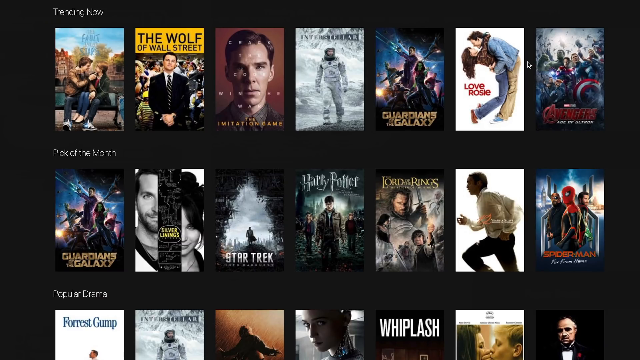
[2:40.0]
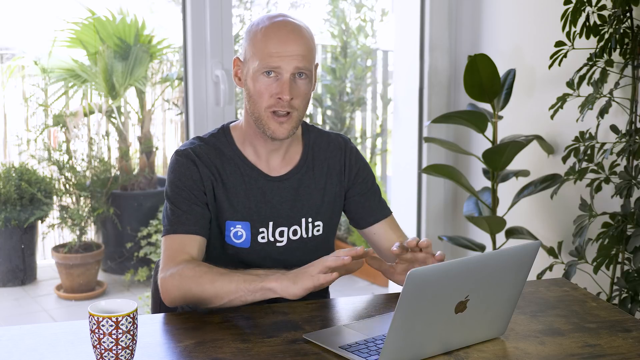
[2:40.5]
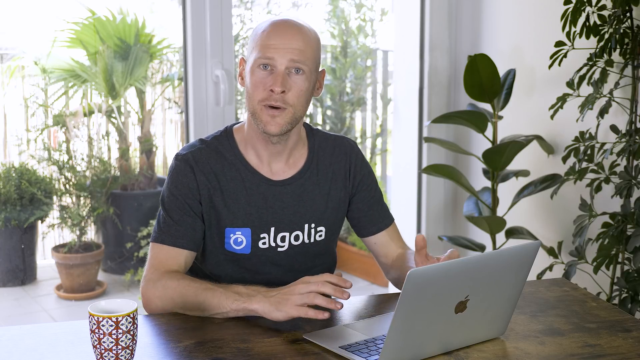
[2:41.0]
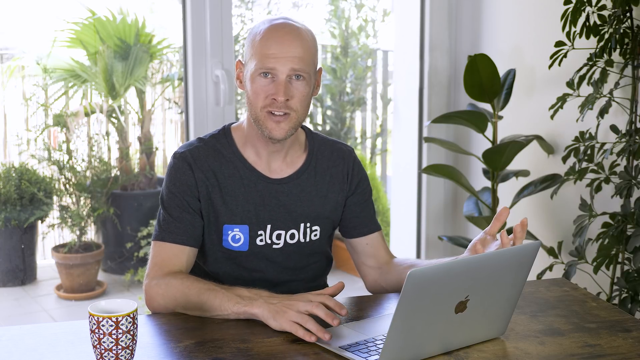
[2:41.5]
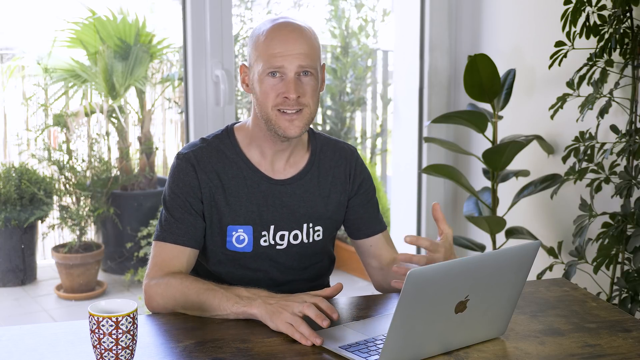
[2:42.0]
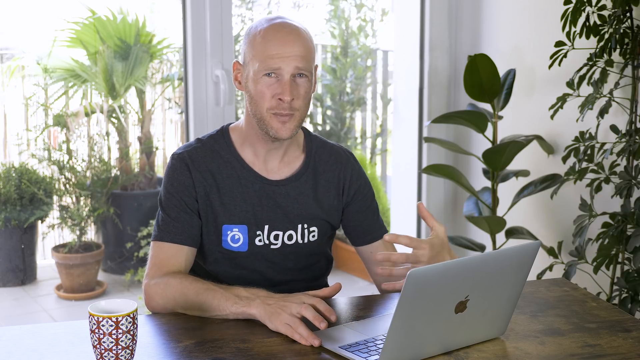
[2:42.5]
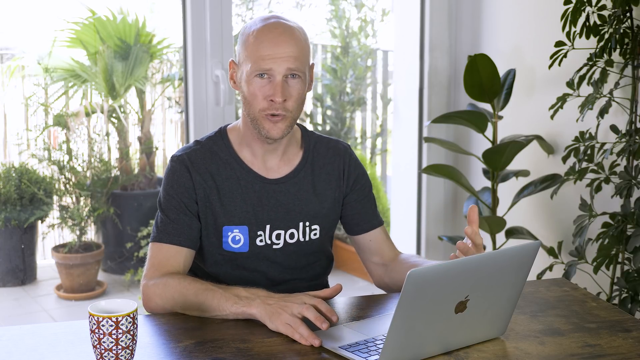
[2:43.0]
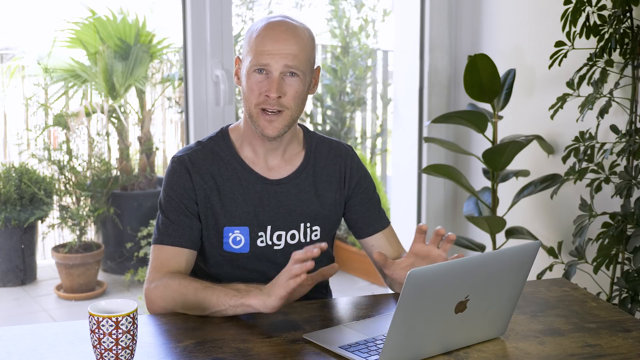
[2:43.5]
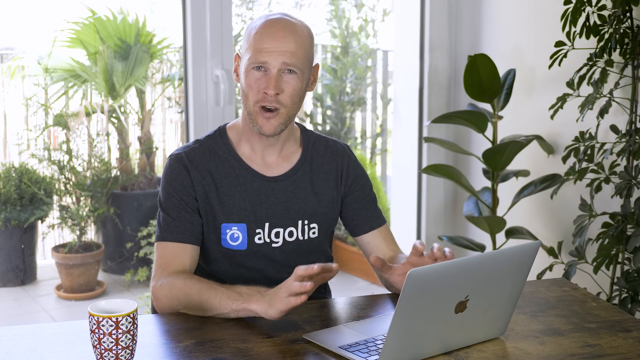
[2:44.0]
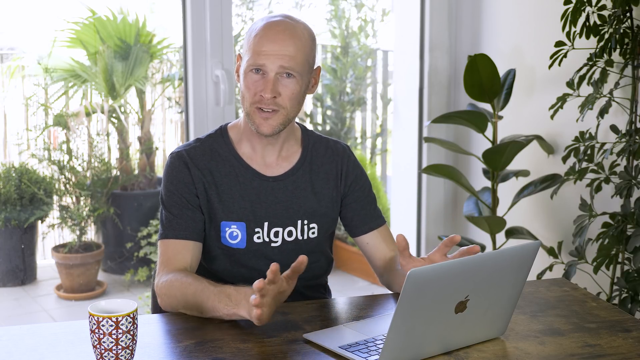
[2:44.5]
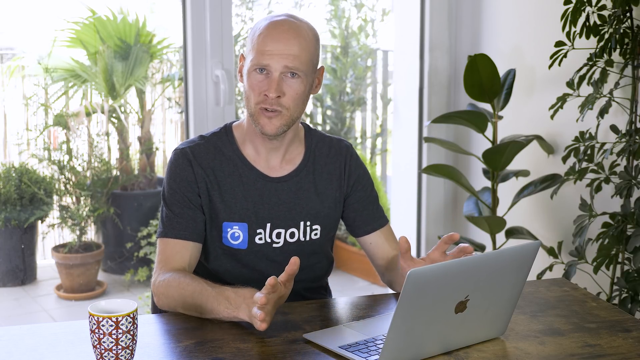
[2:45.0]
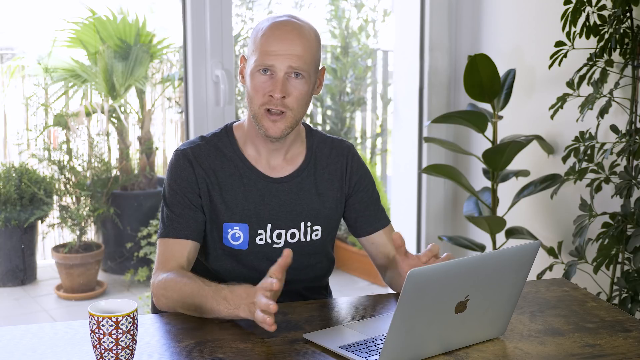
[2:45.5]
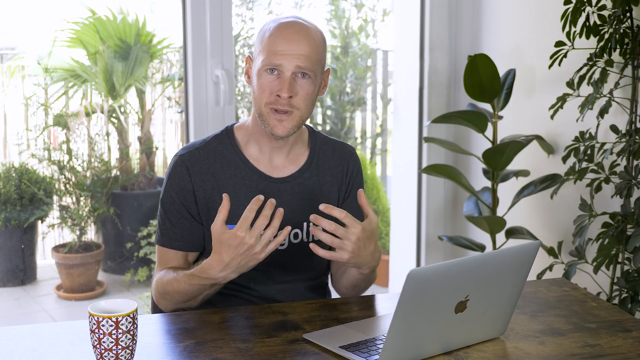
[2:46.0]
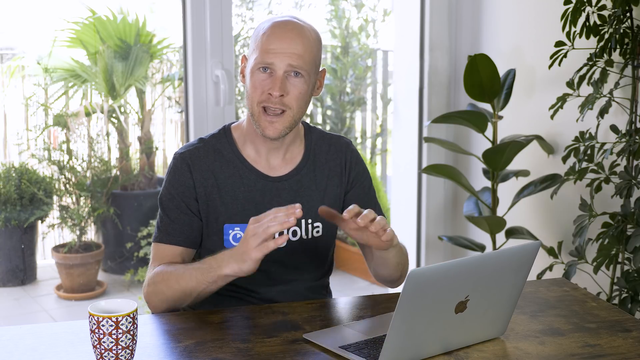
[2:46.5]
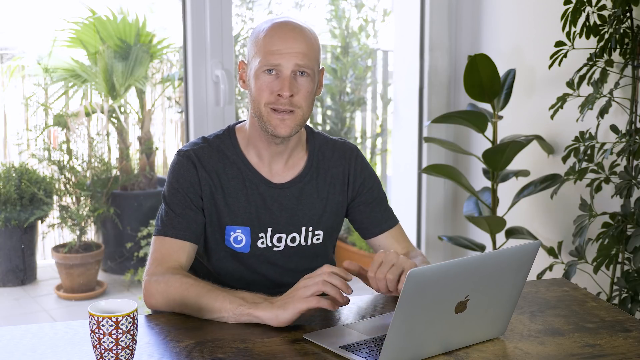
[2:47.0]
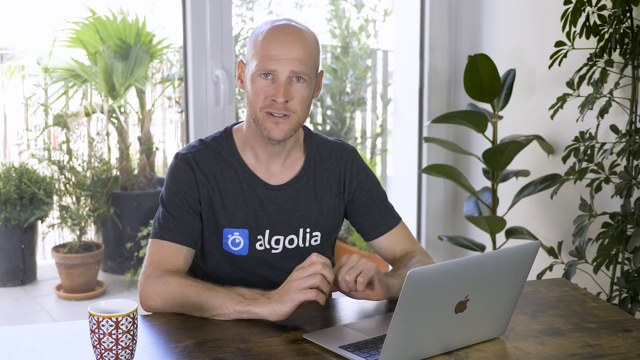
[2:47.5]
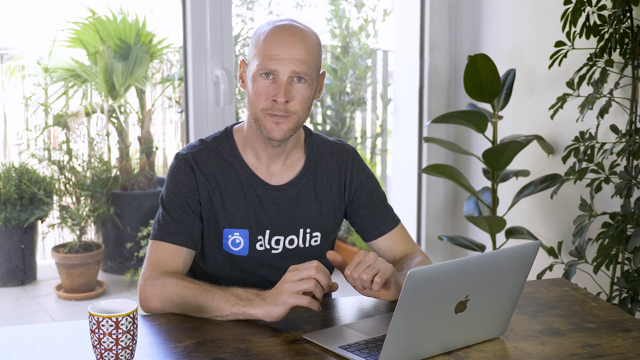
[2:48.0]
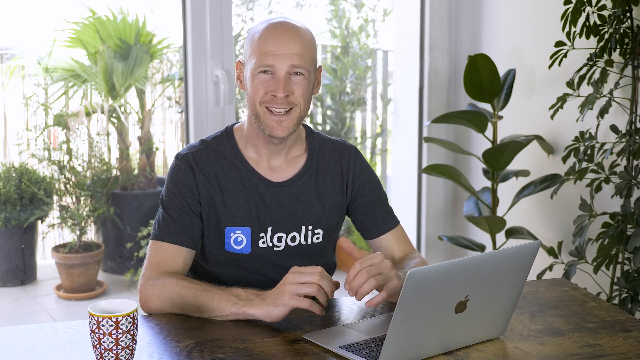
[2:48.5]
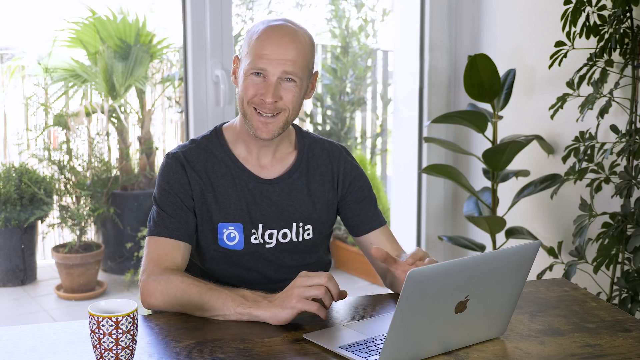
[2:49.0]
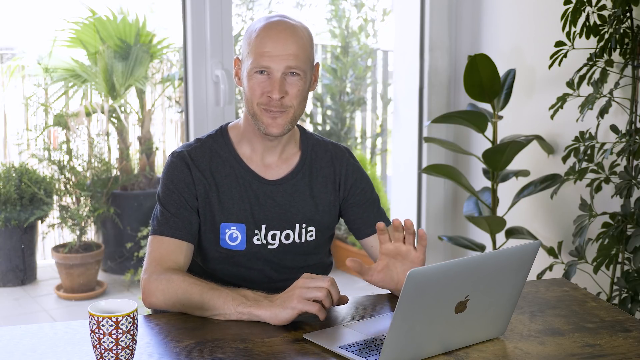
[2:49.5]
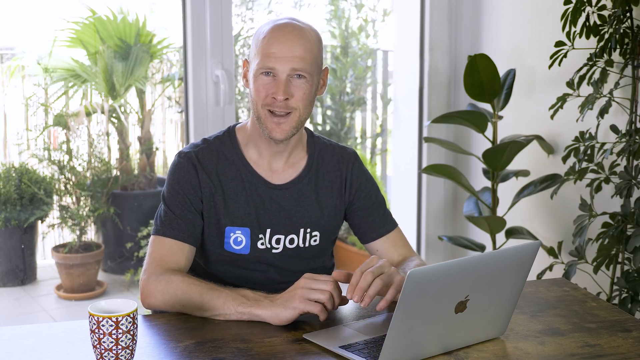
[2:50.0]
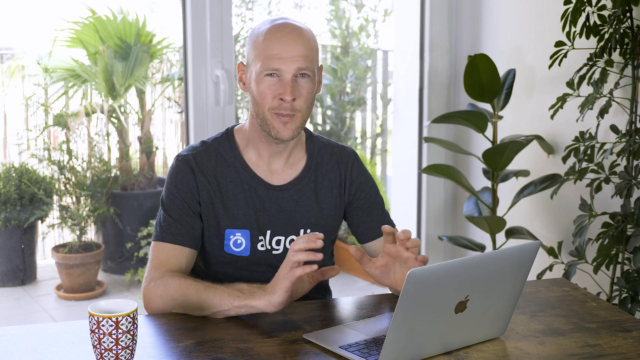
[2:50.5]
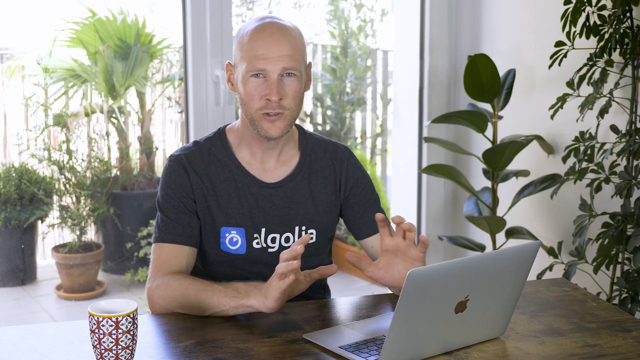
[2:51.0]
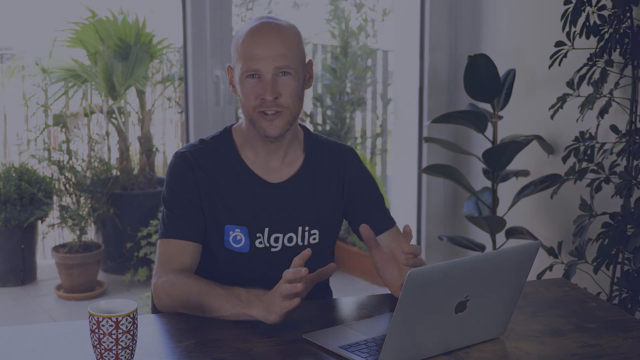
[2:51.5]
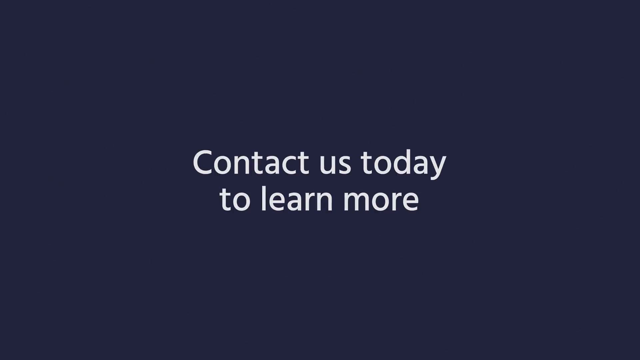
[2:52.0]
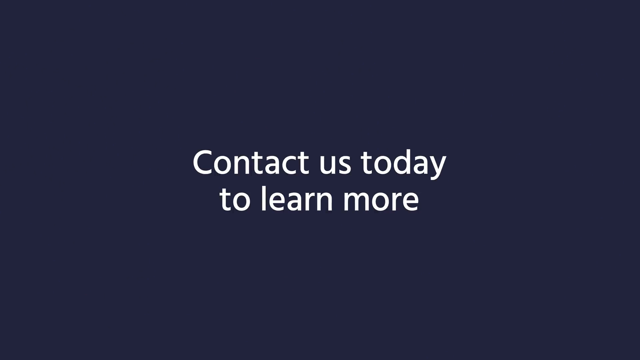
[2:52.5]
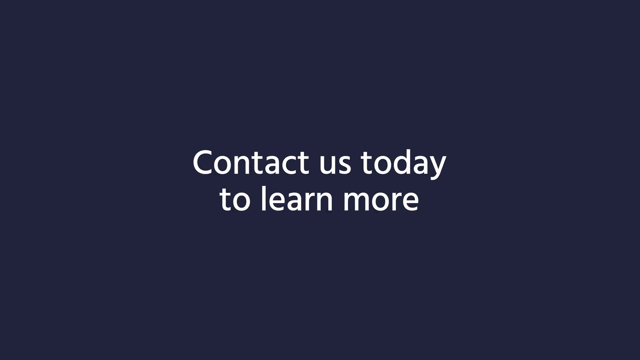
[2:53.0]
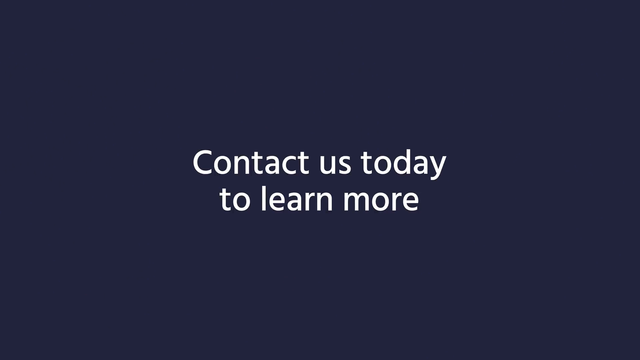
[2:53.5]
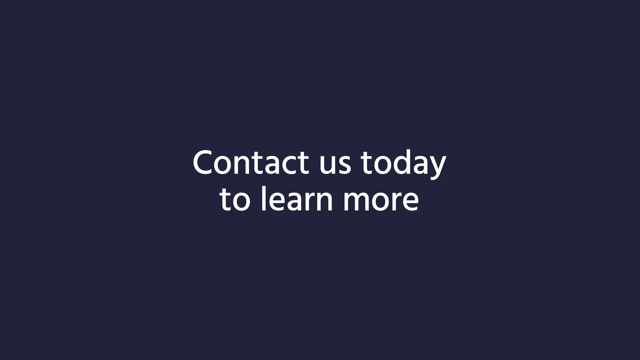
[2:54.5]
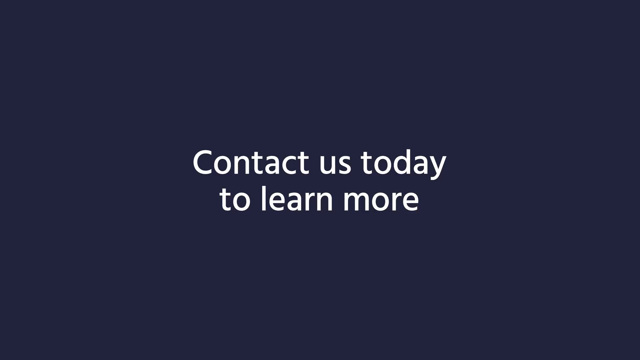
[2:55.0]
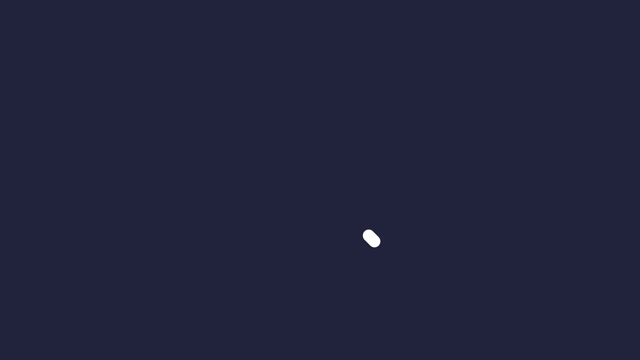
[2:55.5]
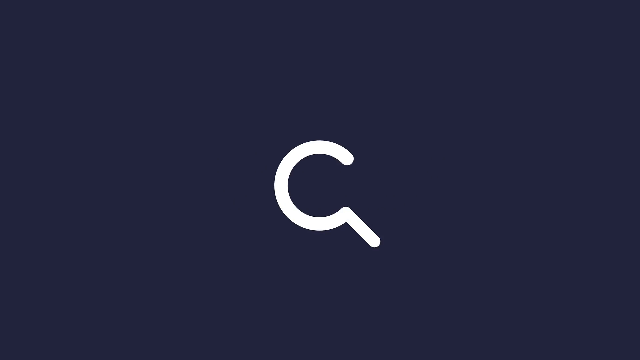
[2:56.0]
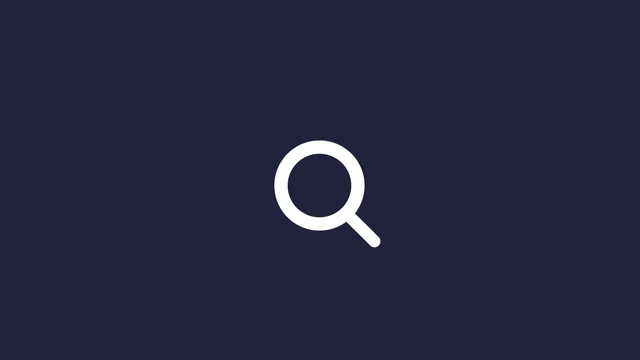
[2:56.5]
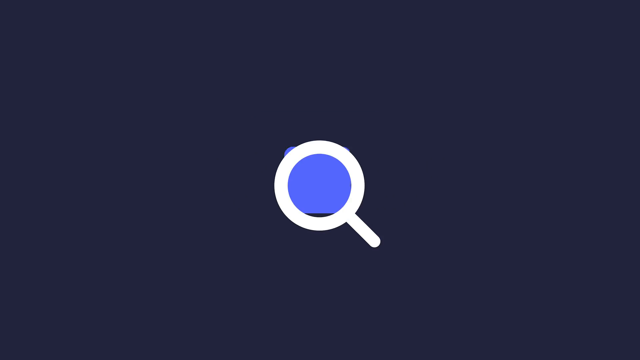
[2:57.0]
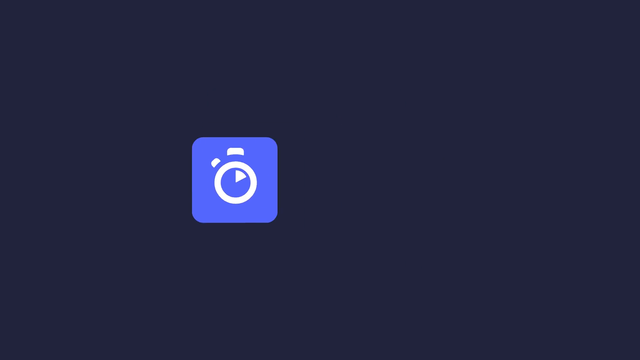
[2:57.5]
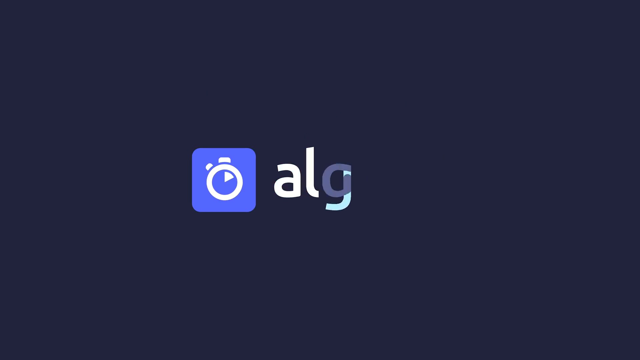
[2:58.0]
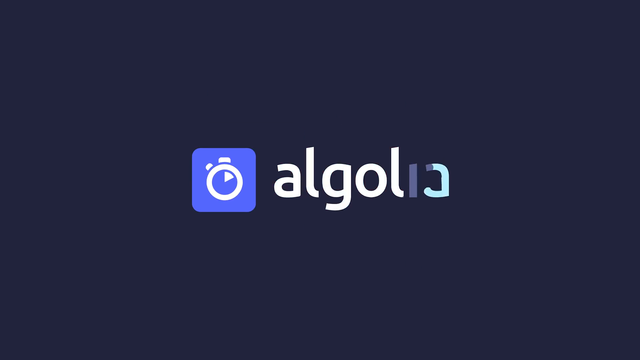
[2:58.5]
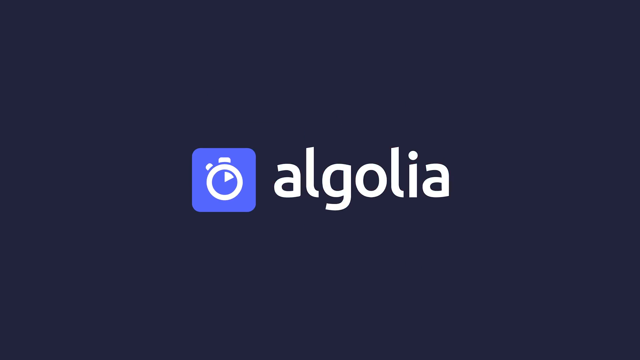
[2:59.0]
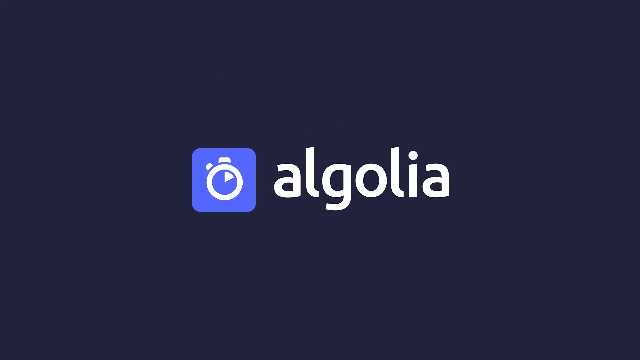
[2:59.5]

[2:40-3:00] The man promotes a website or app called Algolia, which has a stopwatch on its logo. He is in what is apparently his kitchen, where everything is white, the walls, the windows and all, and there are a lot of houseplants. He is bald and white with a scruffy beard. He shows what is on his screen and talks about it; it relates to business, and at times it looks like he is showing how to manage a shopping cart. A search query is shown: he goes to the word "space", then to "hidden figures", and different movies pop up; then the word "speed" appears and different books or movies pop up, with titles such as Wolf of Wall Street visible. At the end, the text says "Contact us today to learn more", followed by the stopwatch and Algolia.